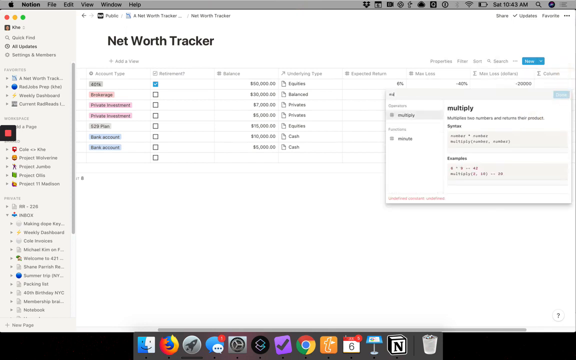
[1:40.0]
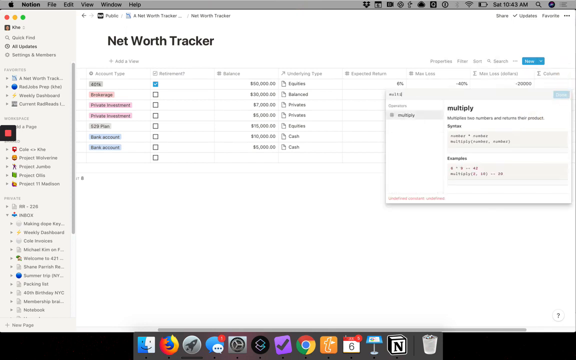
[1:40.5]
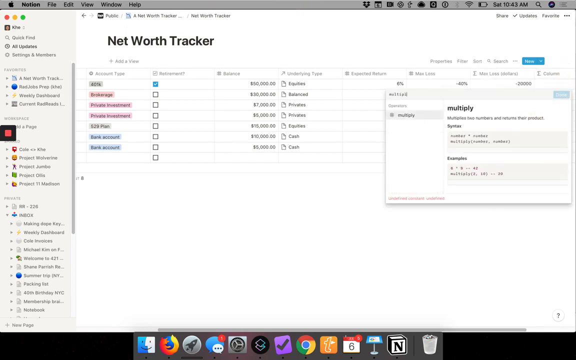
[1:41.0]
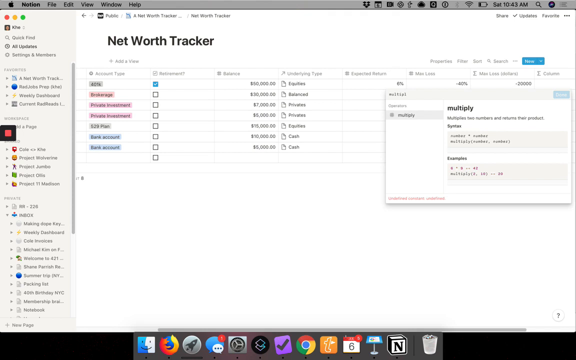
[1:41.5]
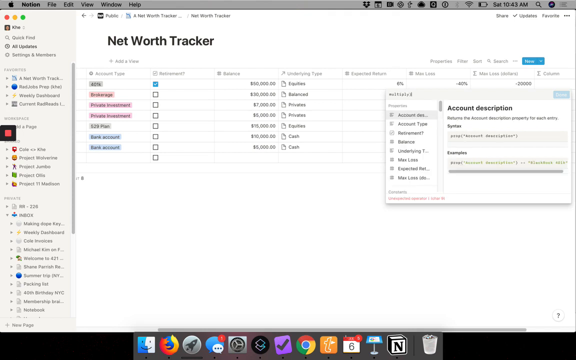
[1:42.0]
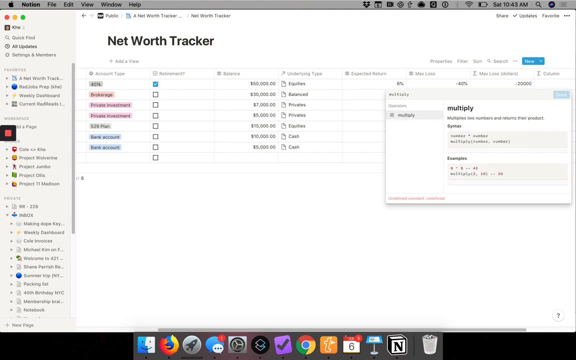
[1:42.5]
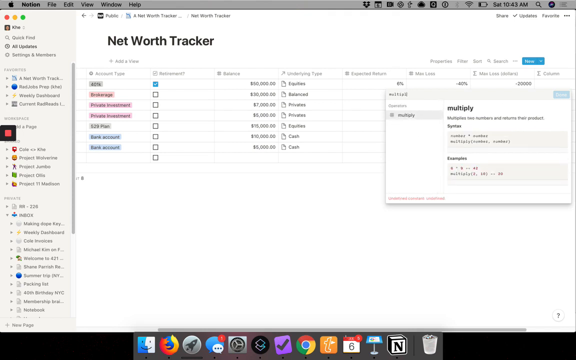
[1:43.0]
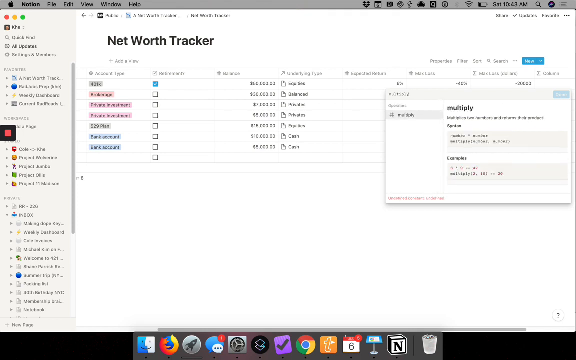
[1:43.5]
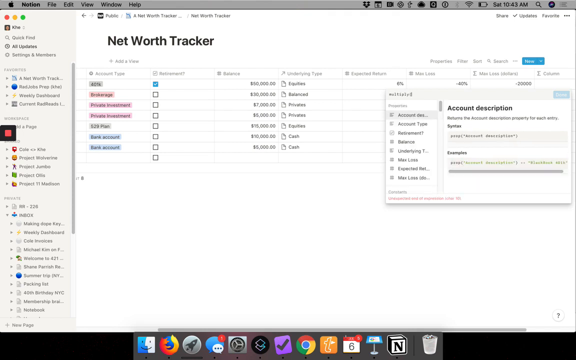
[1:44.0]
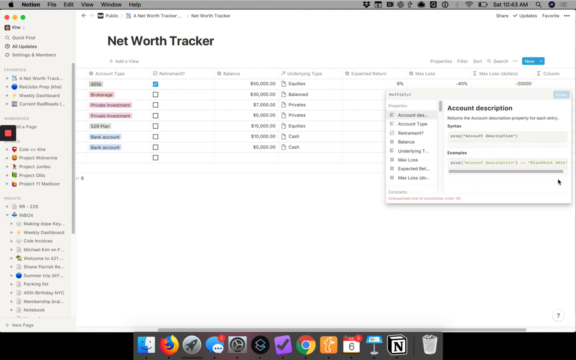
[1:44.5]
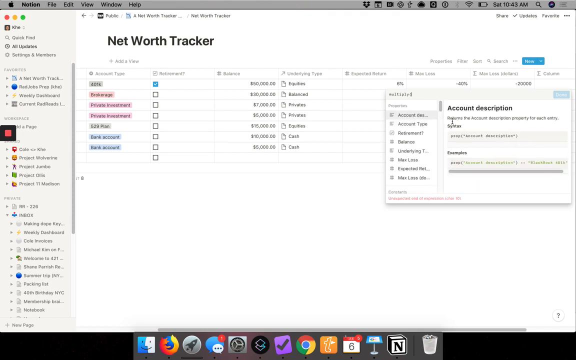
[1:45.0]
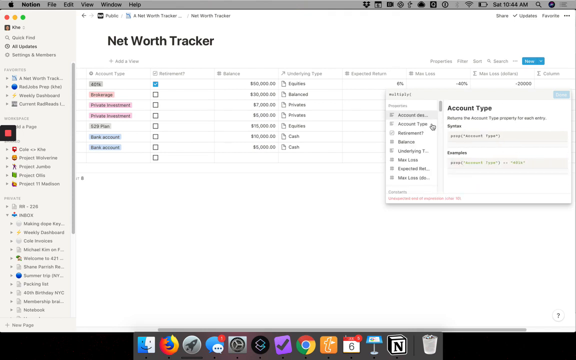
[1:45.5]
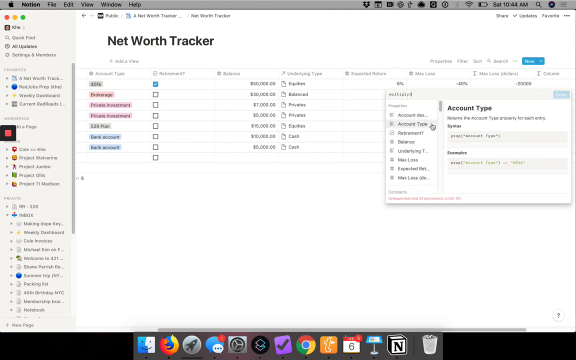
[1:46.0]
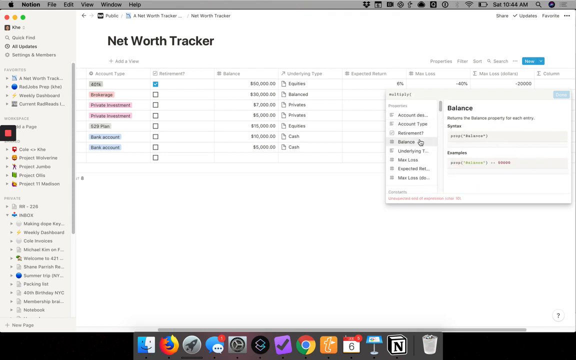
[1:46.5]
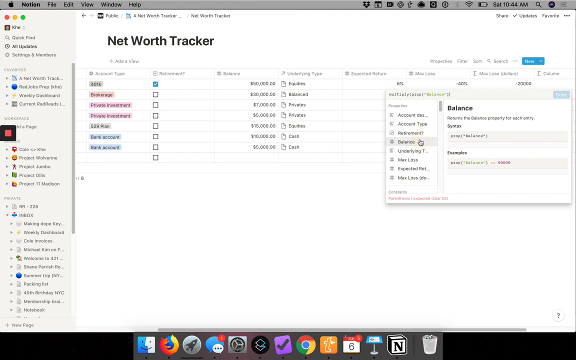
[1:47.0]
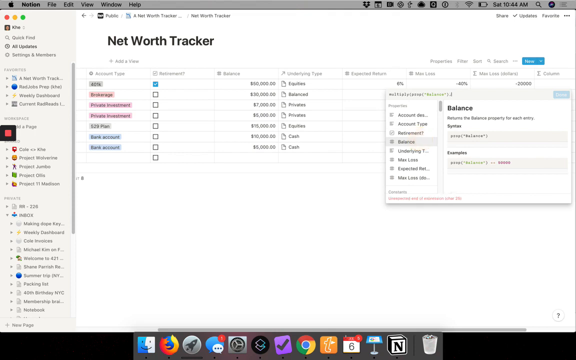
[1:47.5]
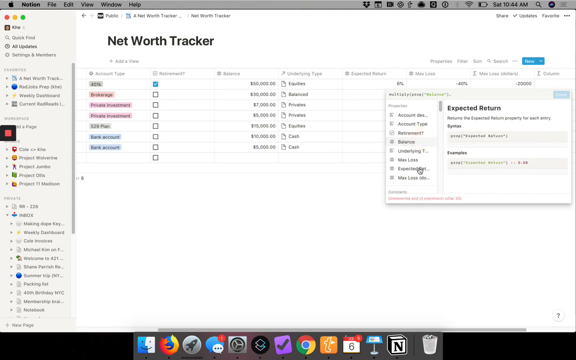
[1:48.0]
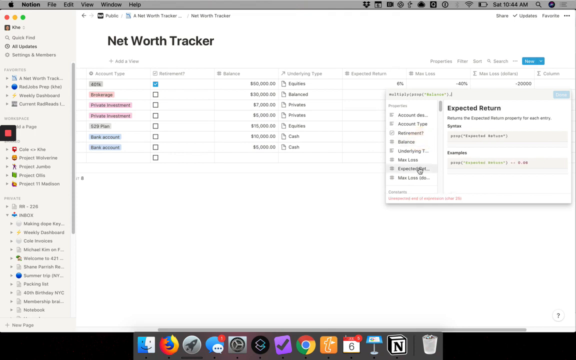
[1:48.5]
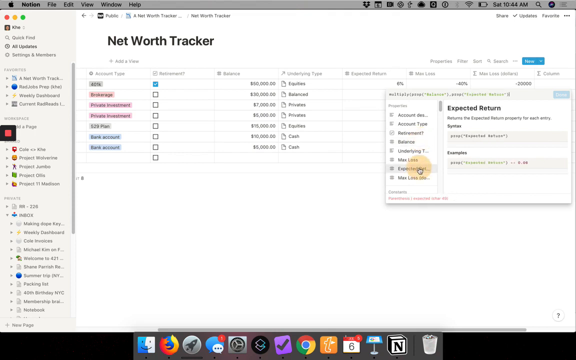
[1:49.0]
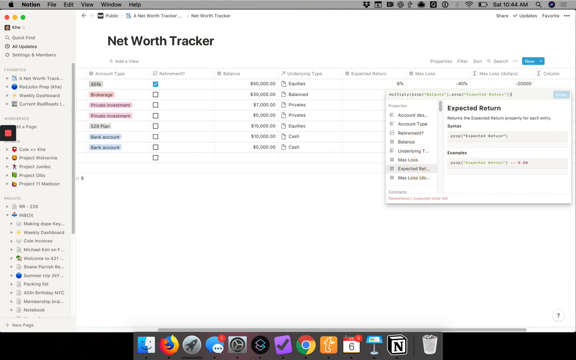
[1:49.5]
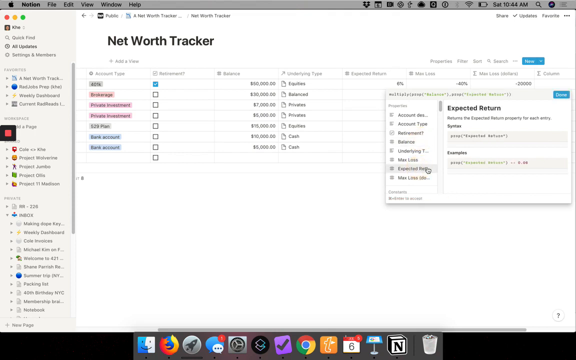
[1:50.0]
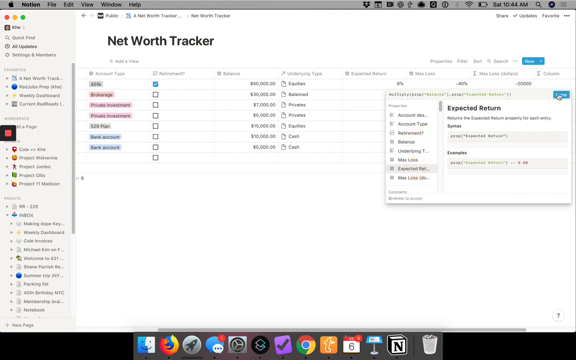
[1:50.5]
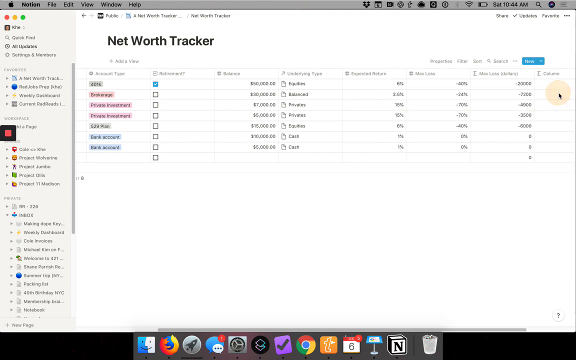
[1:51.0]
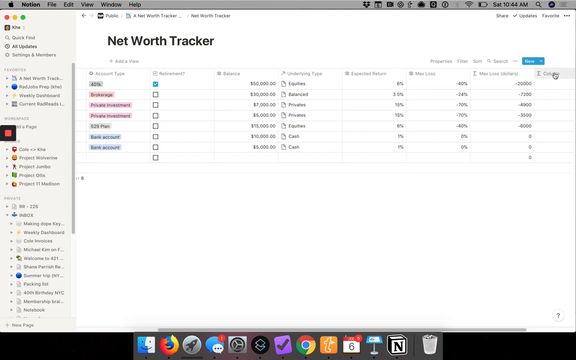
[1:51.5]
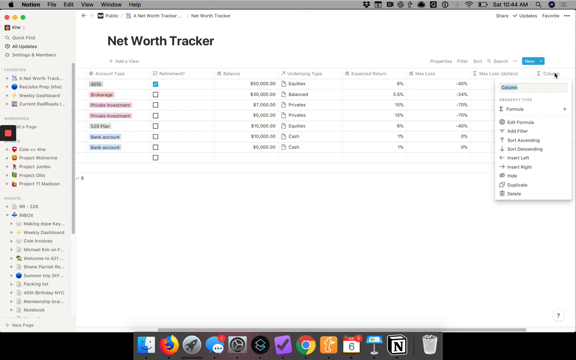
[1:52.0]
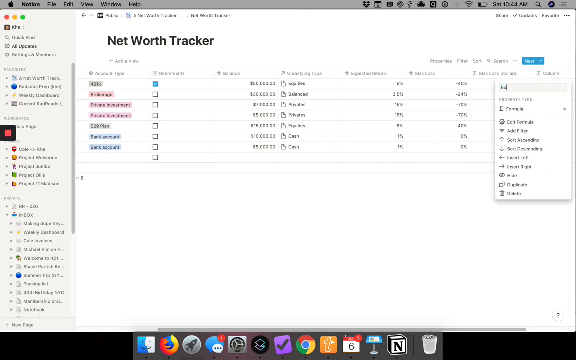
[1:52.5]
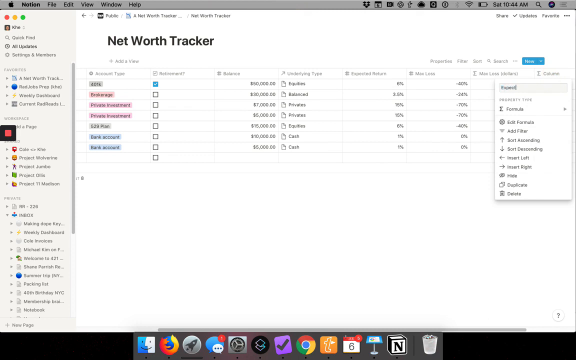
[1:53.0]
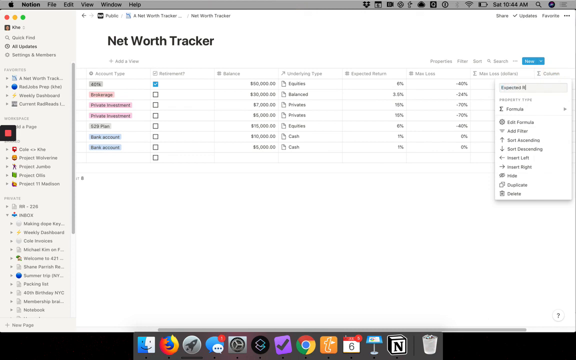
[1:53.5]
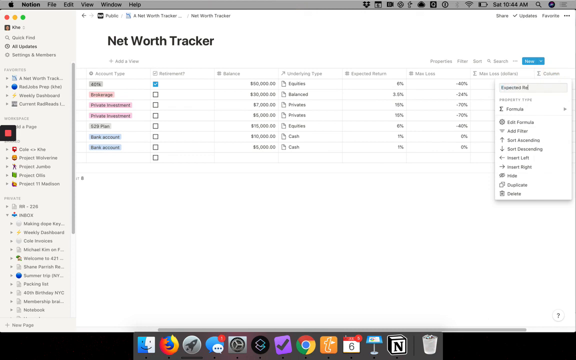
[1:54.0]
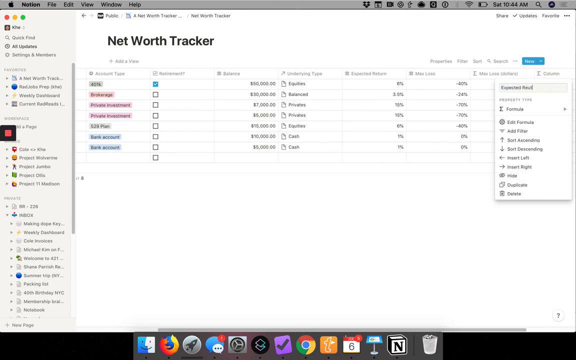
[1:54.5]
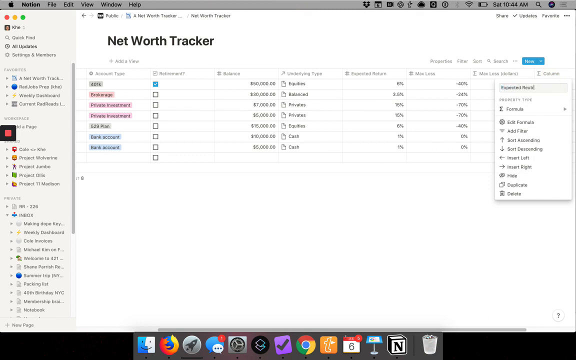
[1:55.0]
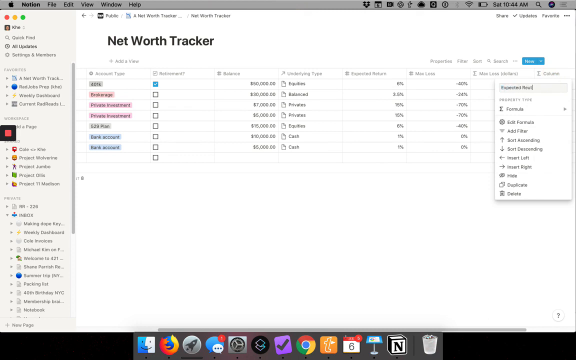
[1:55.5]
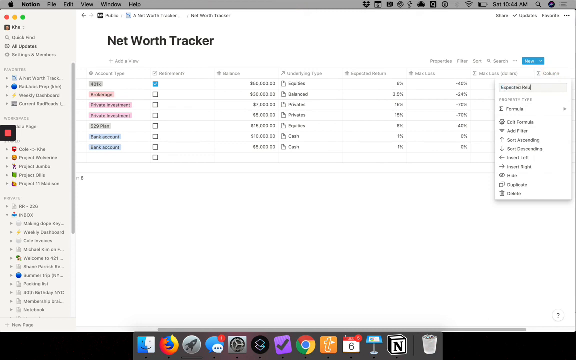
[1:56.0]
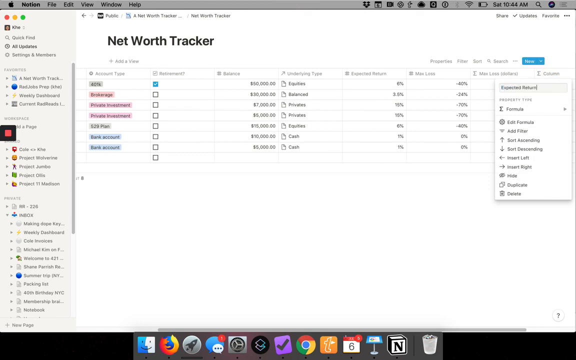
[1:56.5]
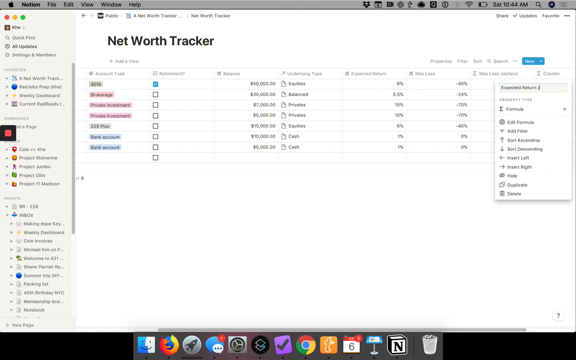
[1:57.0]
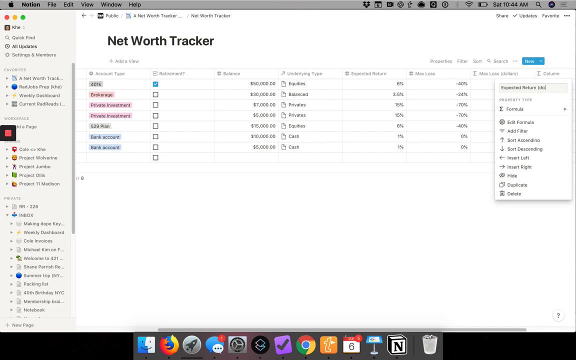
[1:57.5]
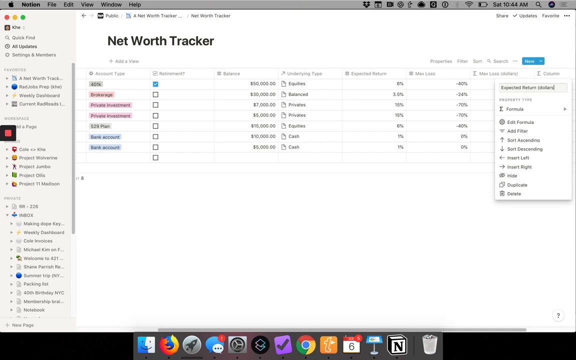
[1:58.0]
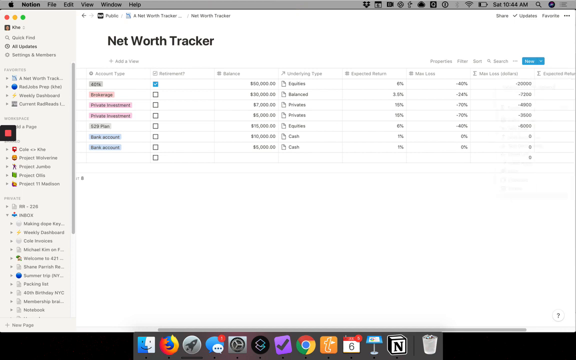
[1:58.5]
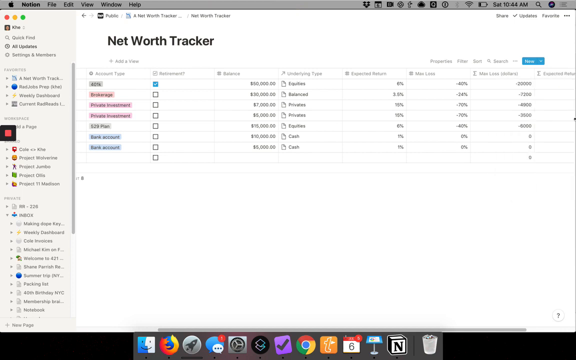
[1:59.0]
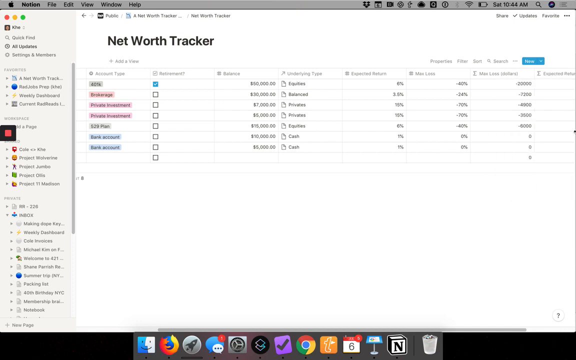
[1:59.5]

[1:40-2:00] The video is taken from someone's Apple computer. The Apple logo is in the upper left corner, and the upper right corner has the date and time and the laptop's battery level. The open program has a white backdrop reading "Net Worth Tracker," with columns. Near the top right, a smaller pop-up box is open, and someone appears to be moving a mouse and typing within it, with the typing producing results. A black cursor selects different words that come up inside the text box. The user scrolls down and hits a tiny blue box to execute, which makes the bigger box go away. Another small box comes up and they continue typing, moving very quickly.